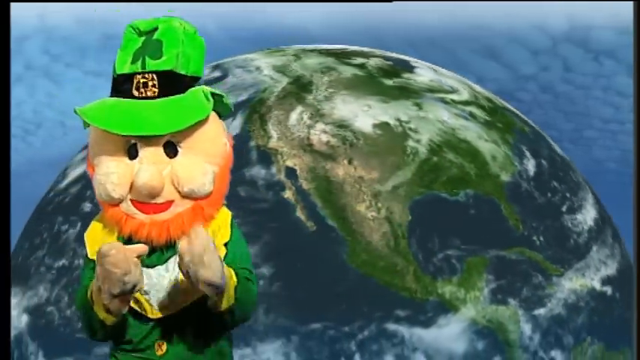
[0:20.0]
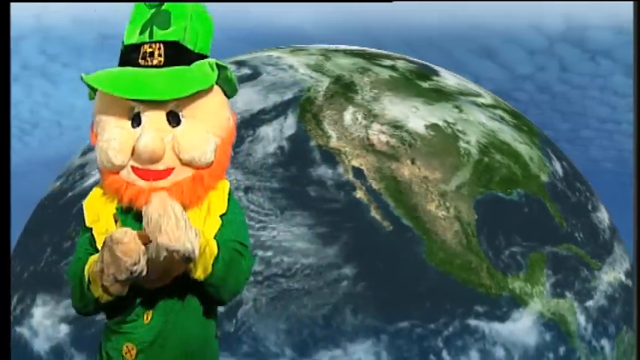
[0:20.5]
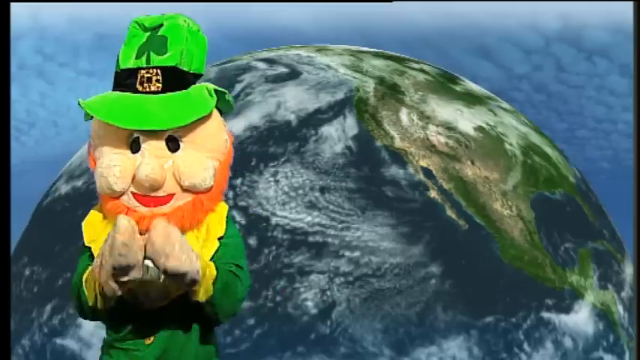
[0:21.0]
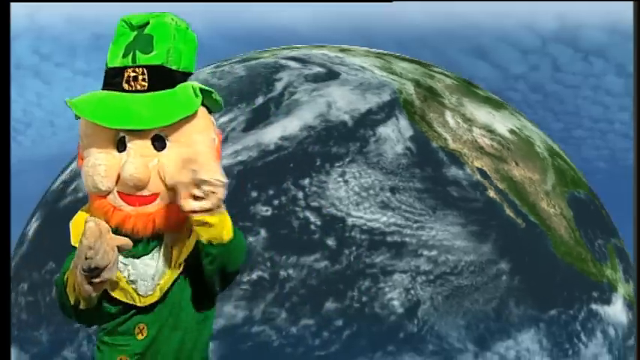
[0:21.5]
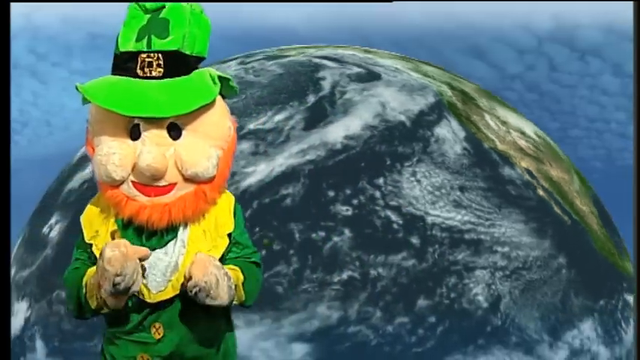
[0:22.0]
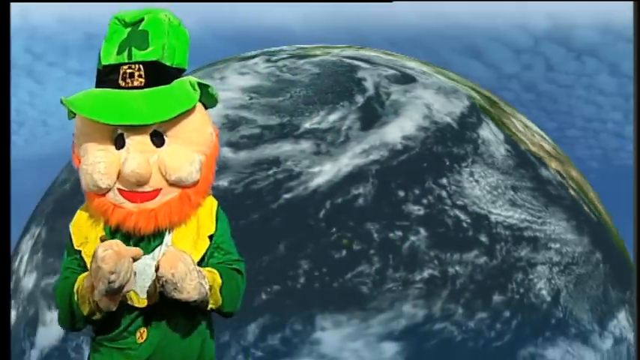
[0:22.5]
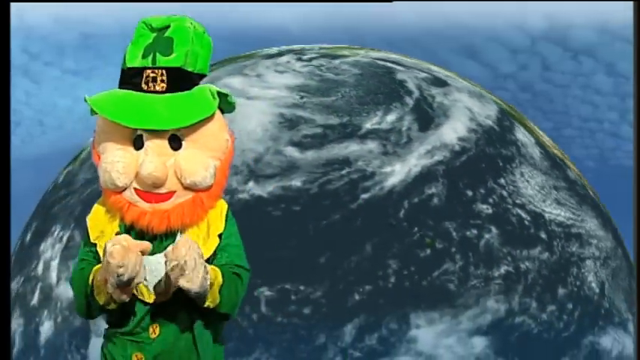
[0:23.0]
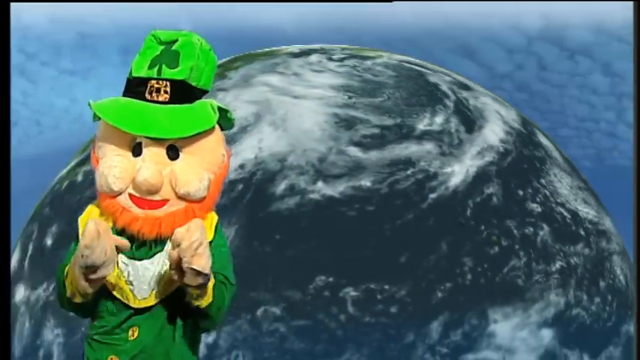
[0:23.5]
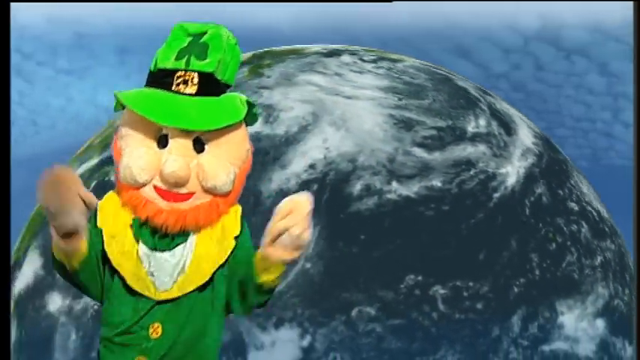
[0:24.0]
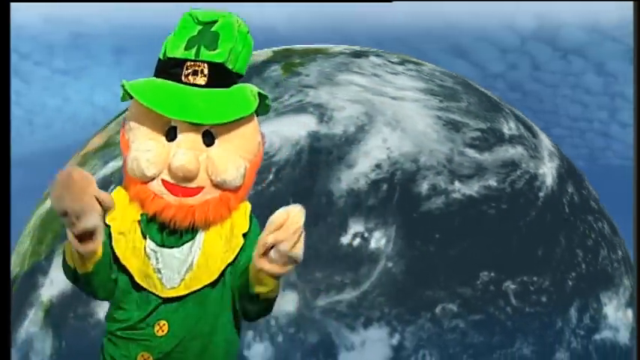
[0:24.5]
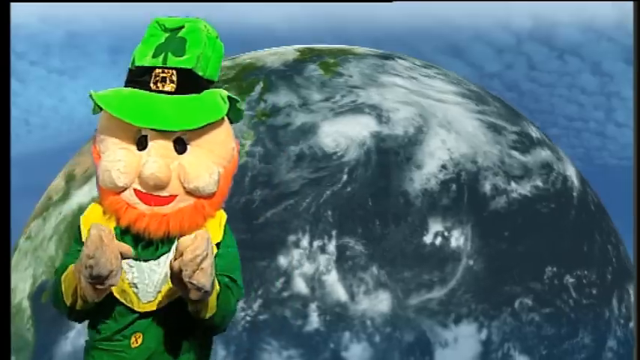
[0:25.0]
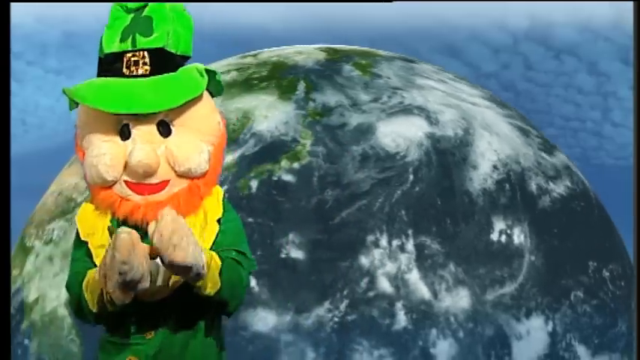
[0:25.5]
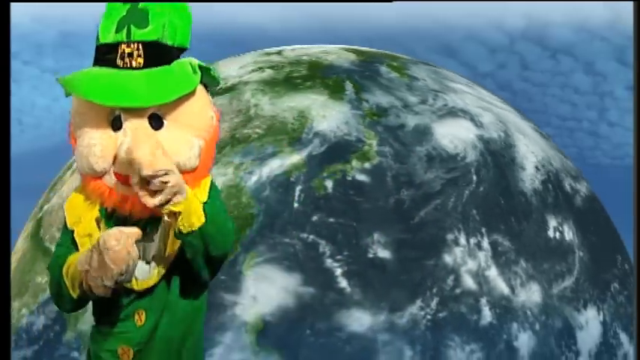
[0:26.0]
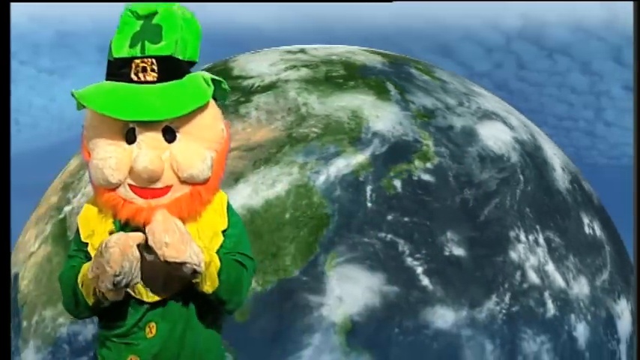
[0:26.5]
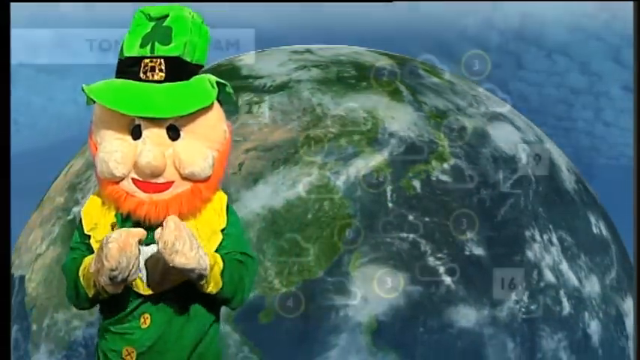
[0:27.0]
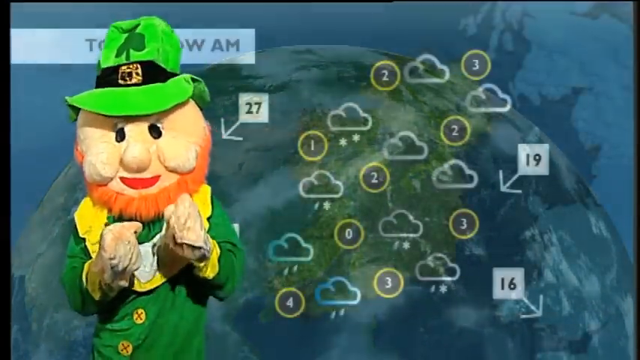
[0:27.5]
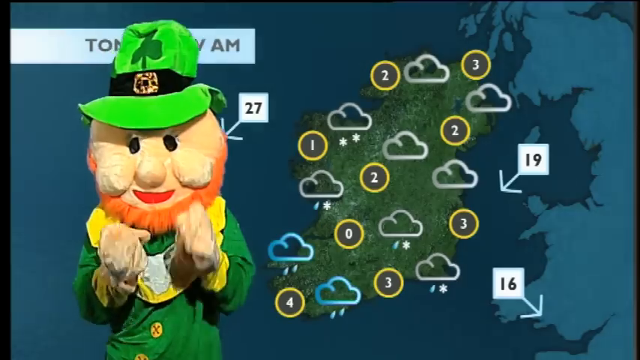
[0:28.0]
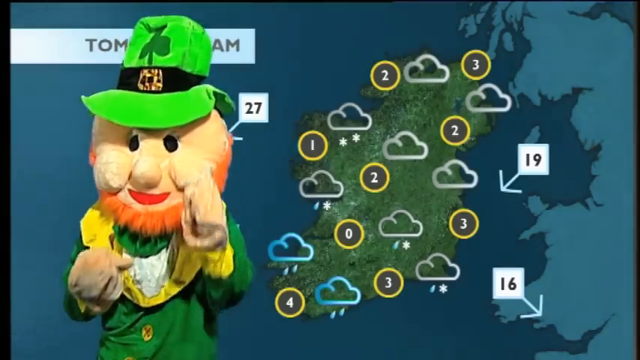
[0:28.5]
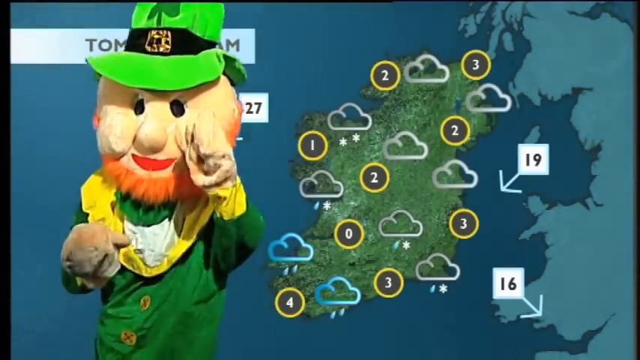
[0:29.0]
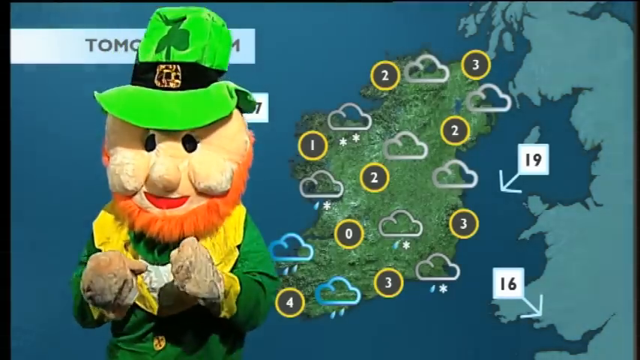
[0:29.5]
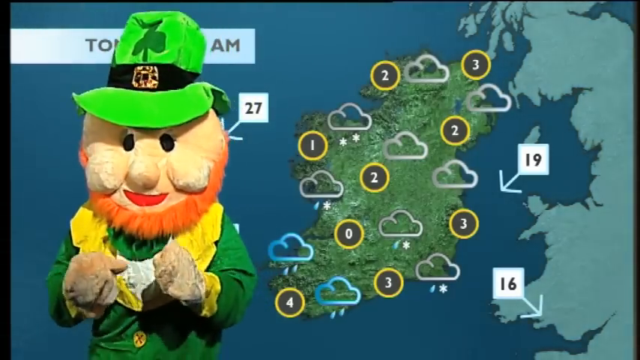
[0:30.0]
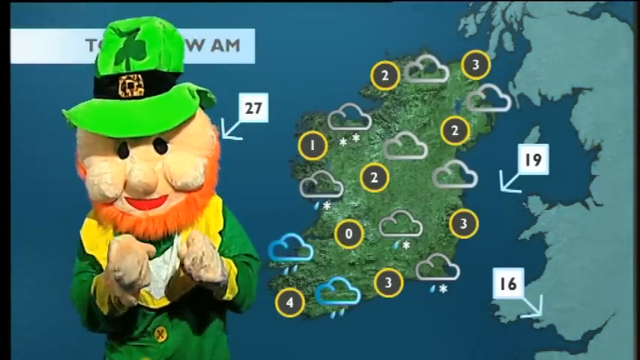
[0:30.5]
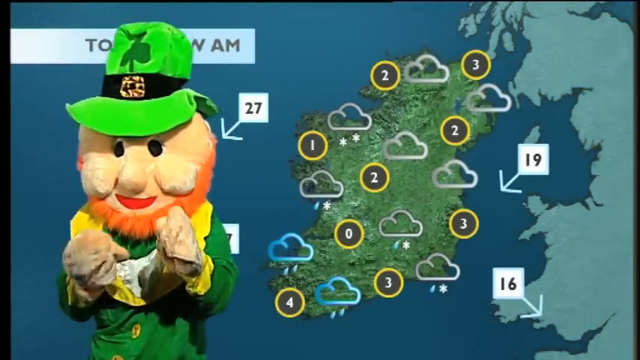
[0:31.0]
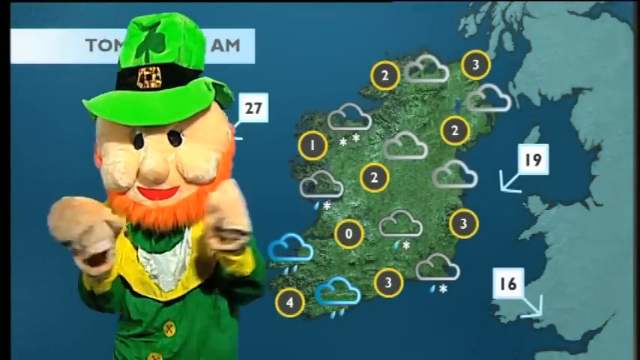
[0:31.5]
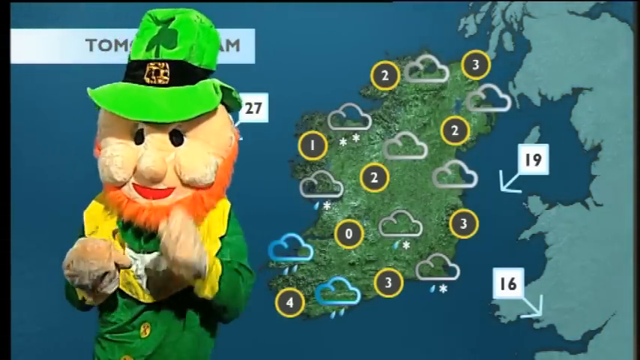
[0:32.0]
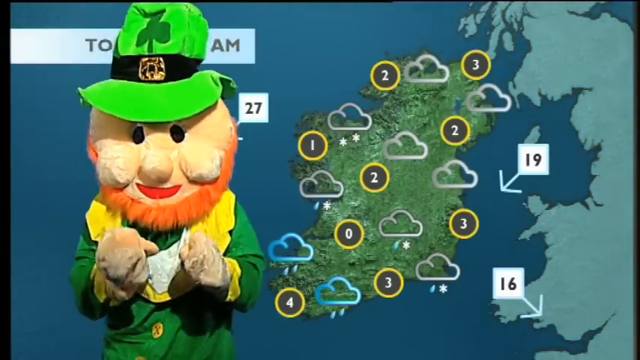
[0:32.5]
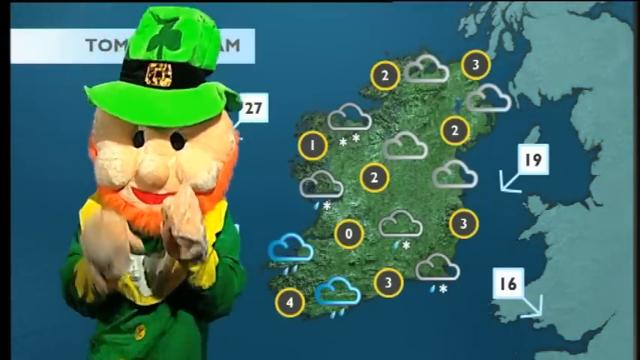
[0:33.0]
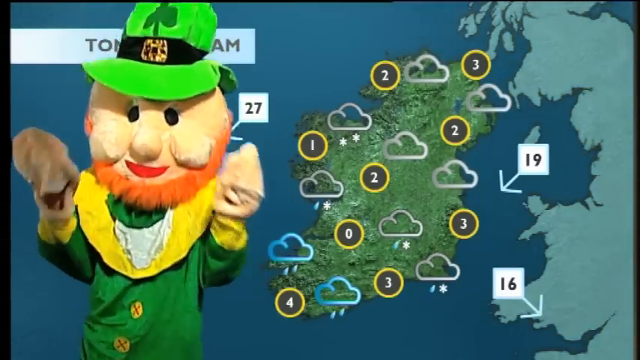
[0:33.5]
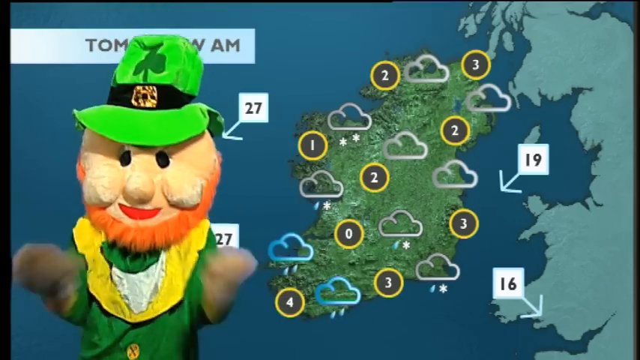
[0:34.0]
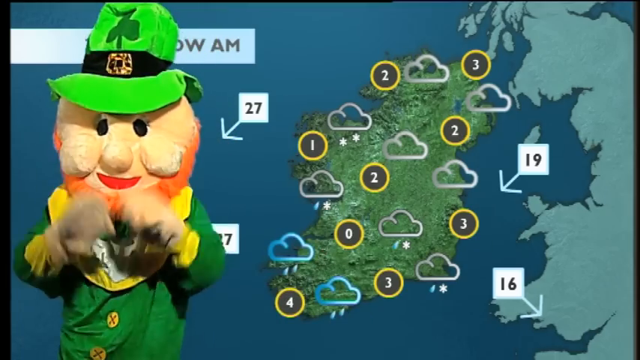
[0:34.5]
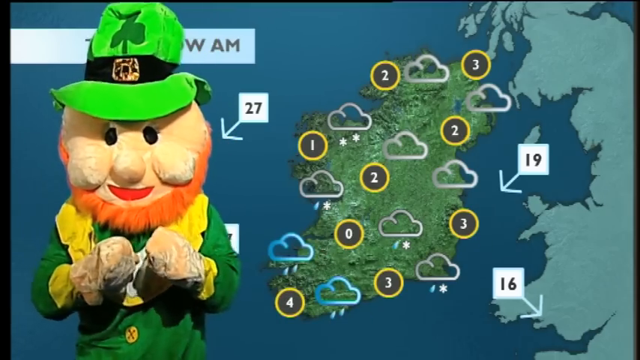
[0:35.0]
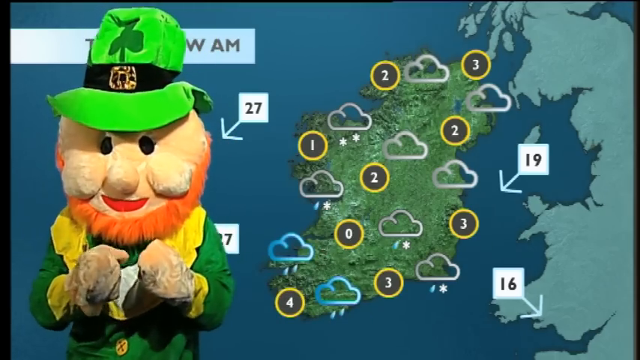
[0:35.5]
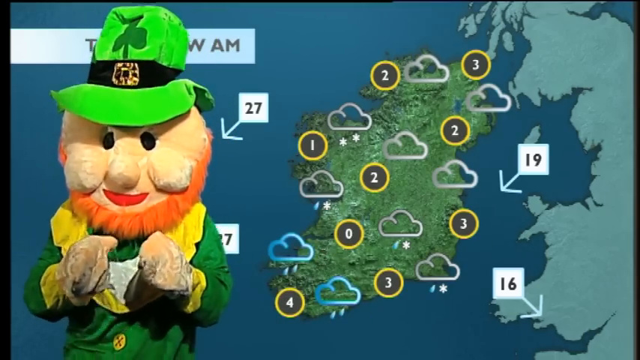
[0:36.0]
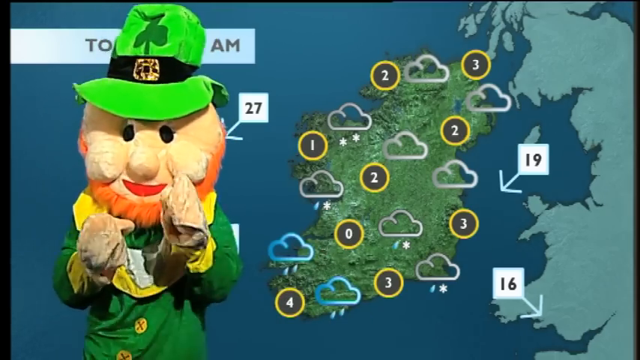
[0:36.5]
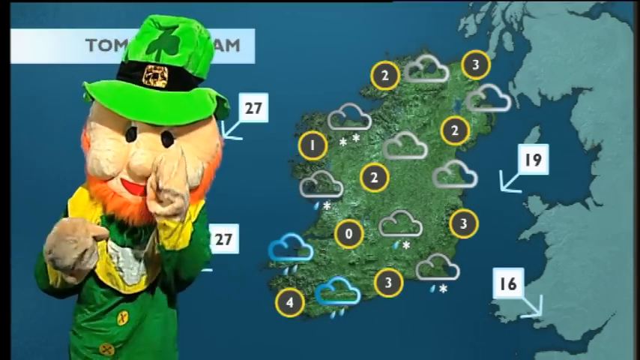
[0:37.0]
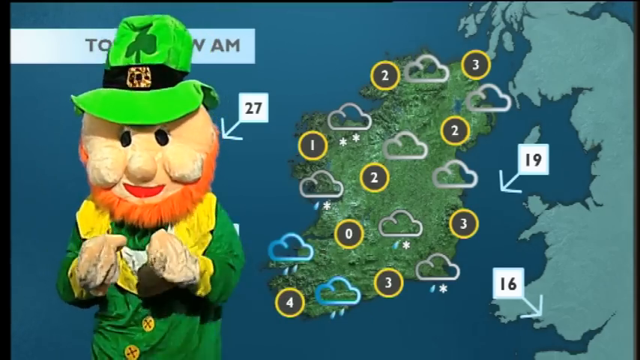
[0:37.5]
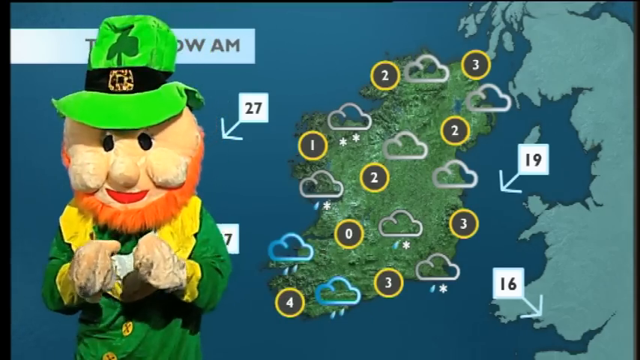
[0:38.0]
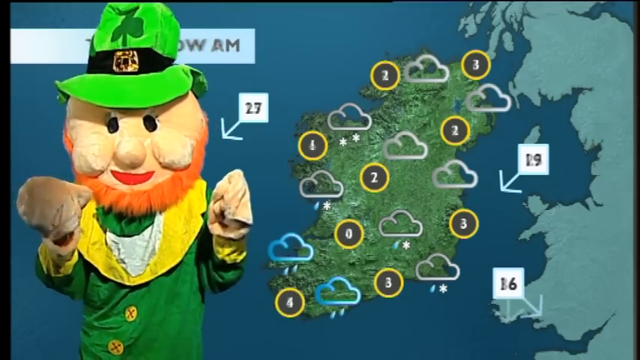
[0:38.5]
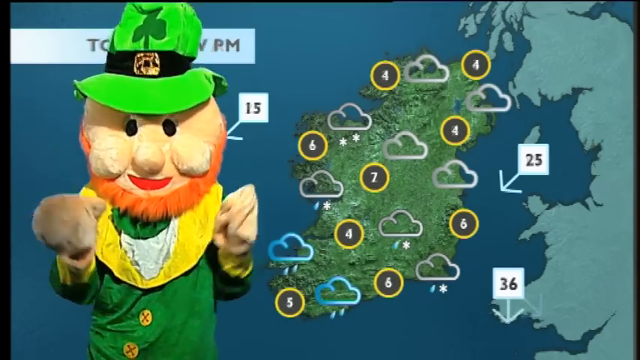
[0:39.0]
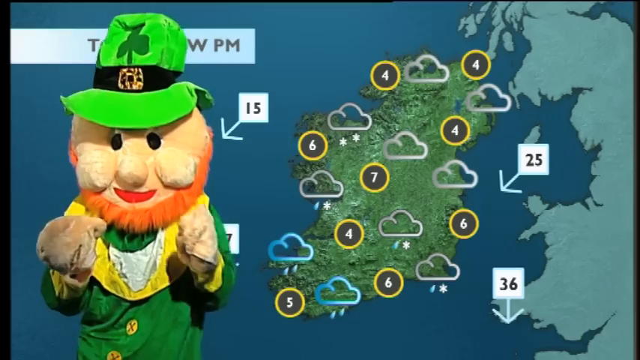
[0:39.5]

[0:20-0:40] On the left-hand side of the frame, the man wears a green hat with a black ribbon on it. He has black eyes, pale skin, chubby cheeks that are pushed out, red lips, and a lion-like mustache that looks orange. His outfit is mainly green, with a bit of yellow at the edges on the shoulders and hands. Behind him is a sky that is mostly white with some blue in the background. In the middle of the sky there seems to be a rotating globe in dark blue, white and green. The man in the costume is constantly cheering. Next, a weather forecast is shown with "tomorrow a.m." written on it, in yellow, blue and light blue, showing clouds, rain and rain symbols.